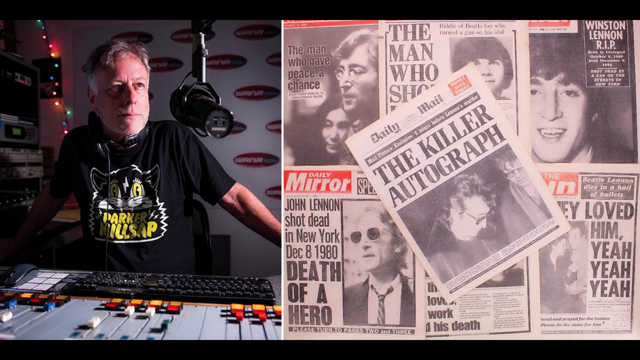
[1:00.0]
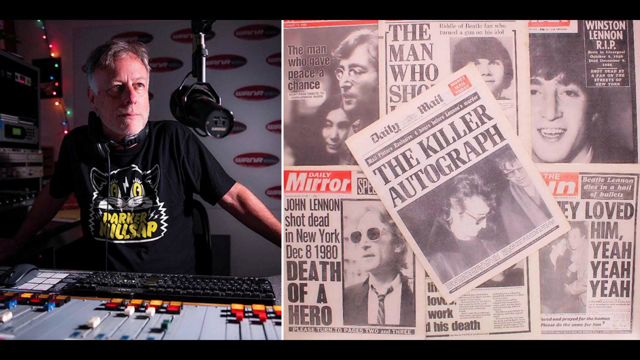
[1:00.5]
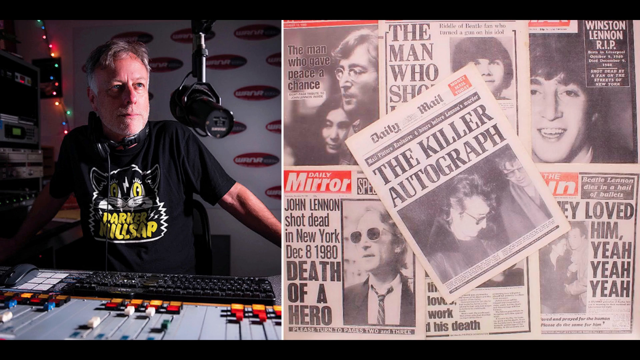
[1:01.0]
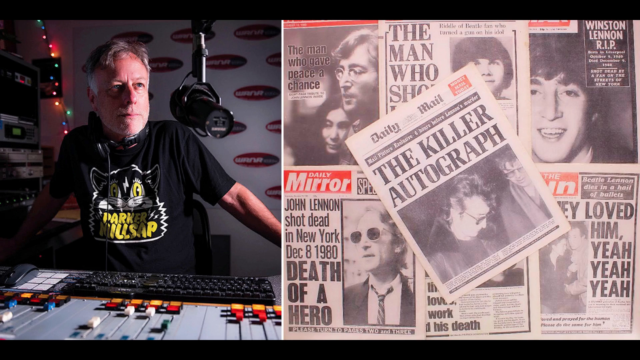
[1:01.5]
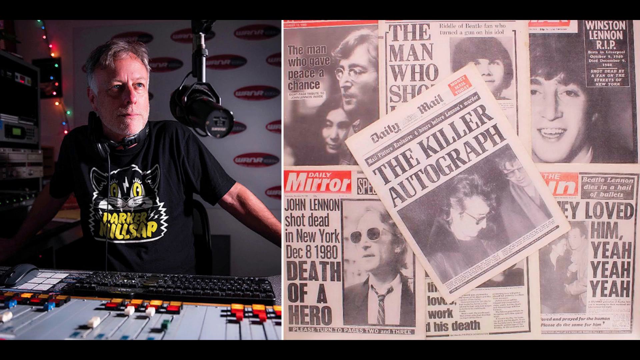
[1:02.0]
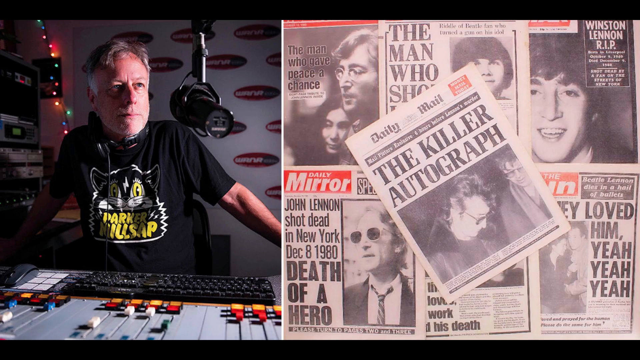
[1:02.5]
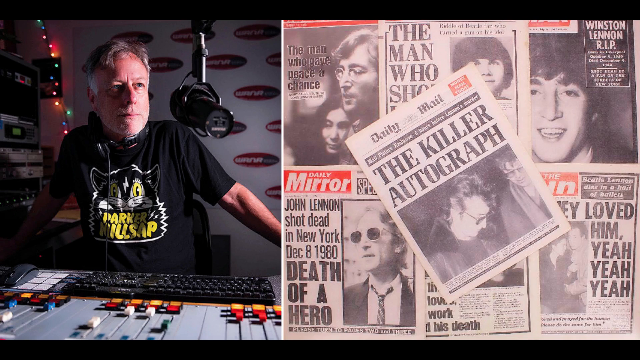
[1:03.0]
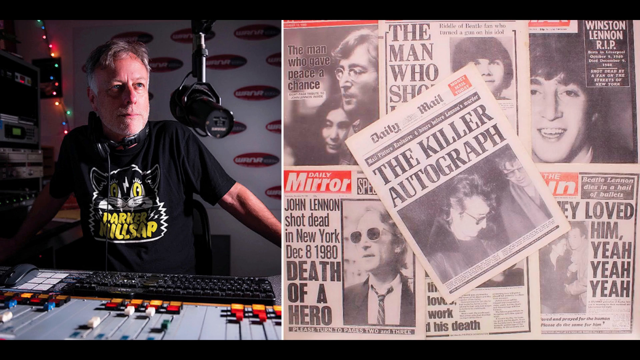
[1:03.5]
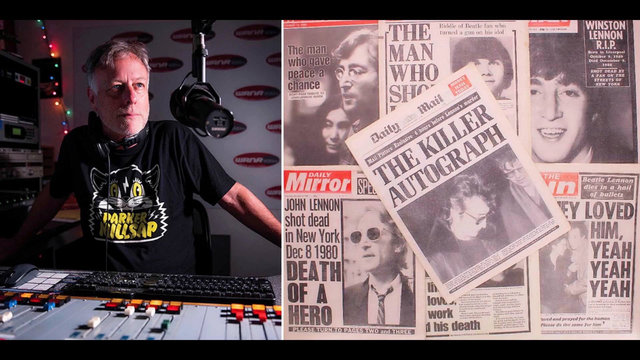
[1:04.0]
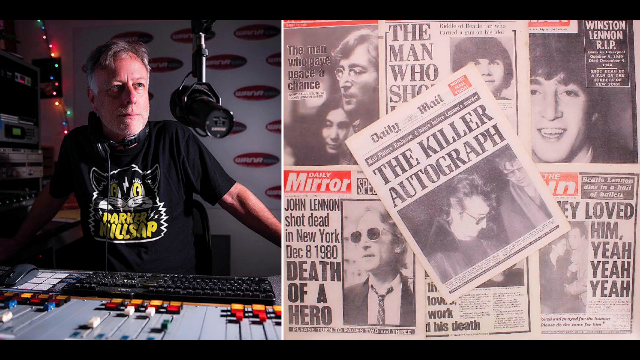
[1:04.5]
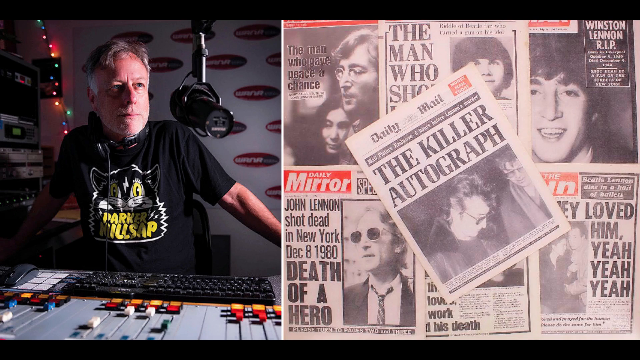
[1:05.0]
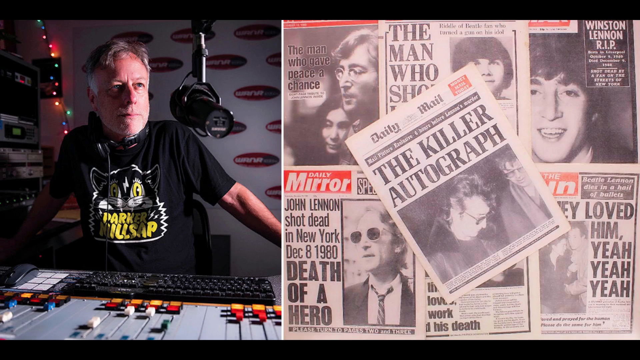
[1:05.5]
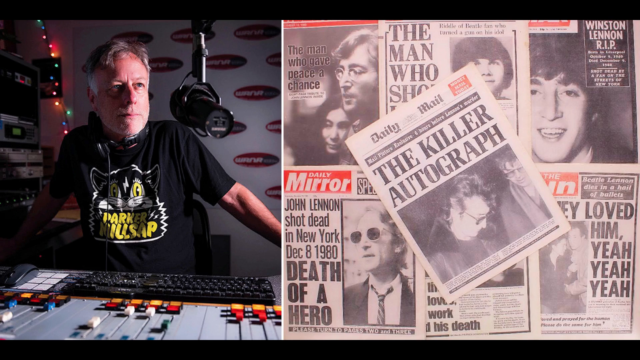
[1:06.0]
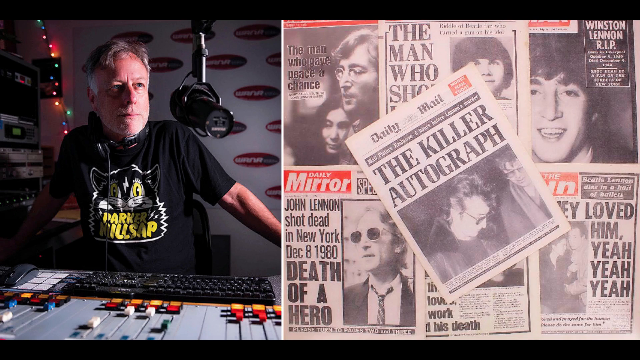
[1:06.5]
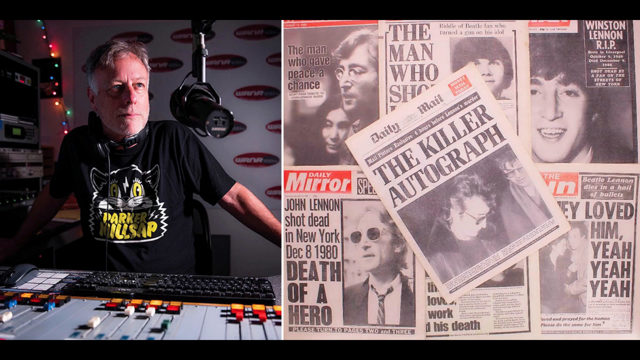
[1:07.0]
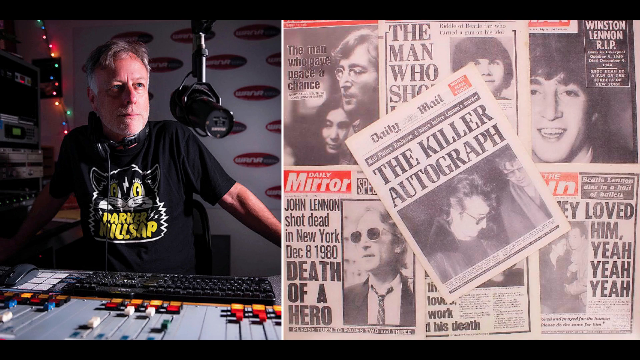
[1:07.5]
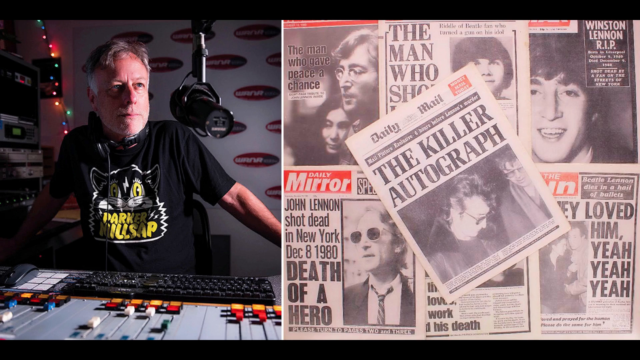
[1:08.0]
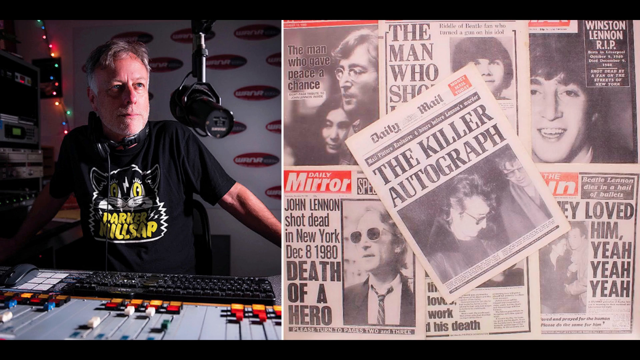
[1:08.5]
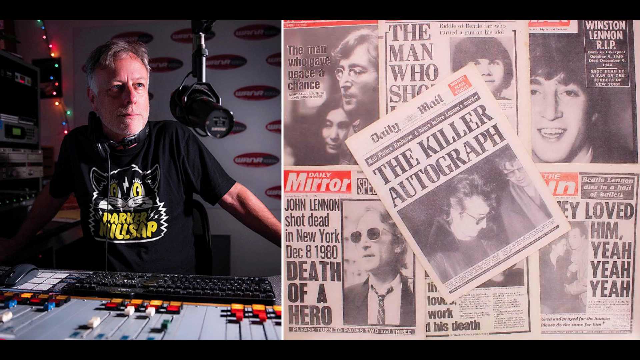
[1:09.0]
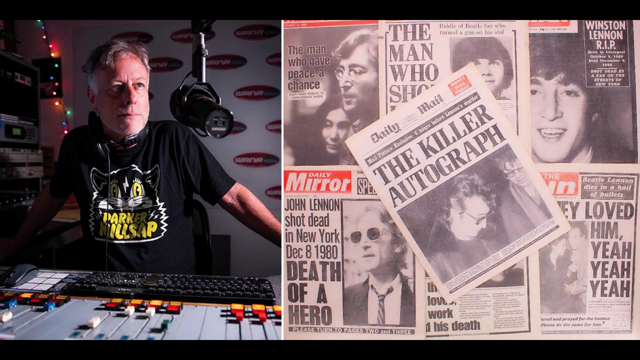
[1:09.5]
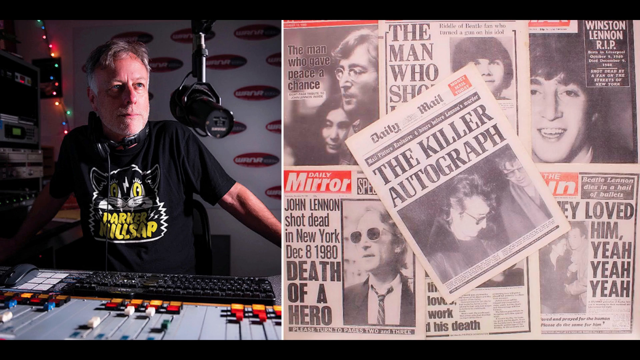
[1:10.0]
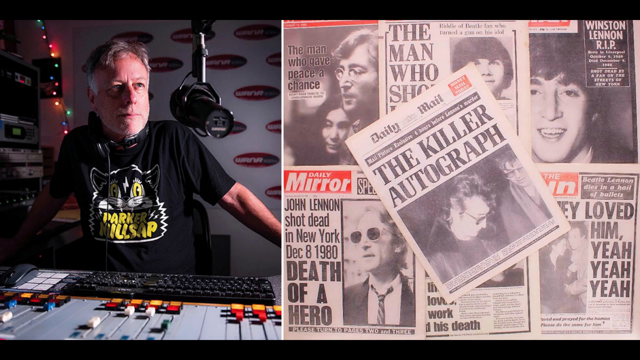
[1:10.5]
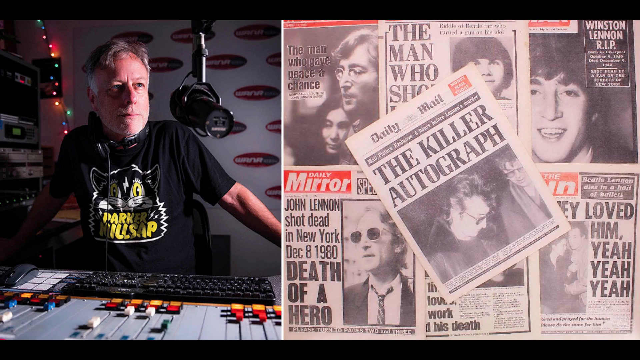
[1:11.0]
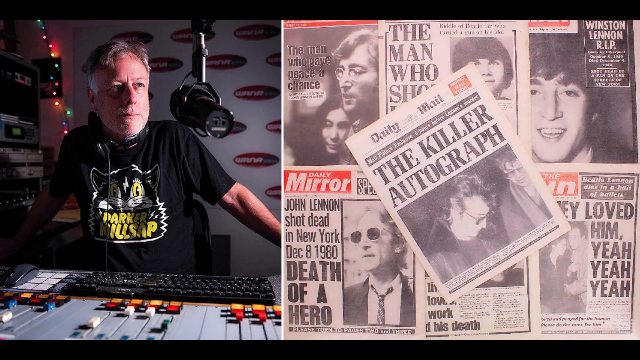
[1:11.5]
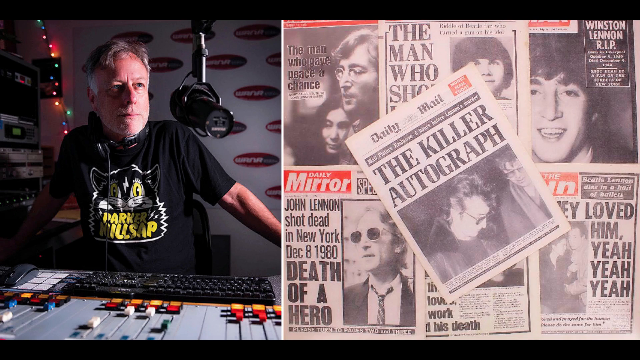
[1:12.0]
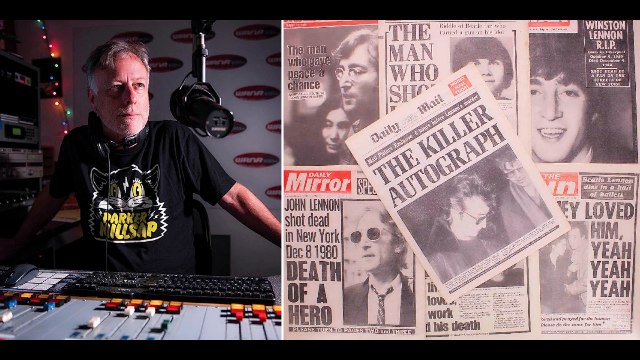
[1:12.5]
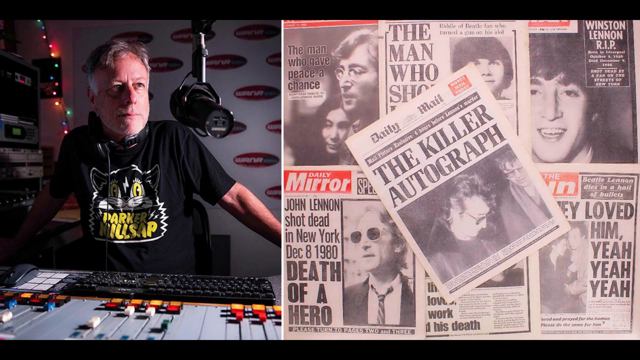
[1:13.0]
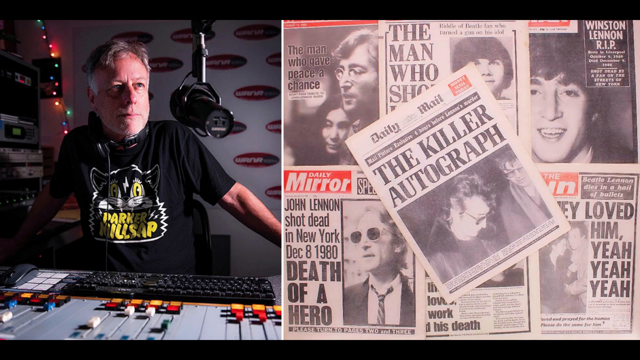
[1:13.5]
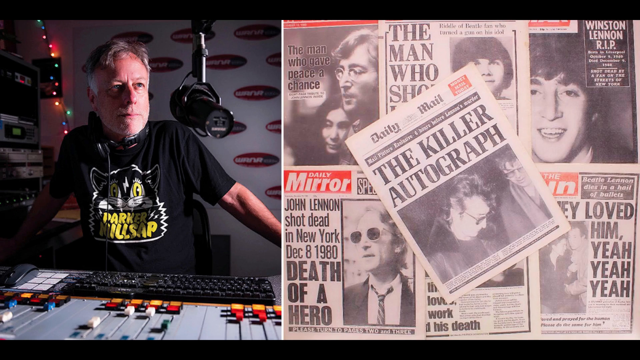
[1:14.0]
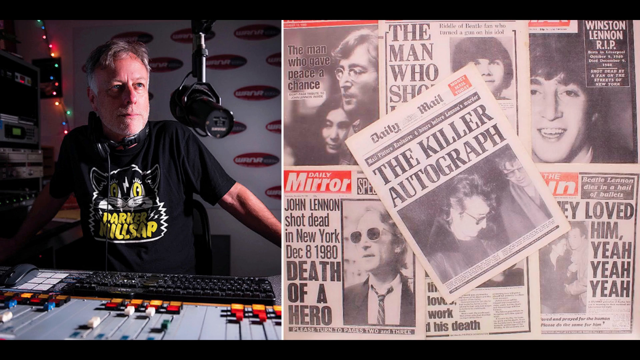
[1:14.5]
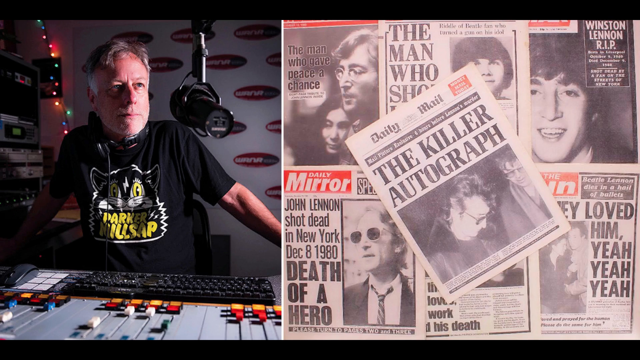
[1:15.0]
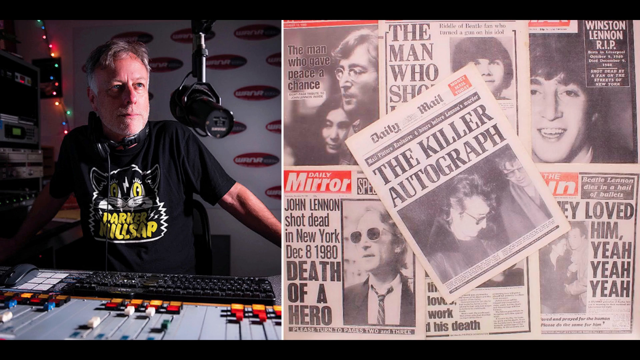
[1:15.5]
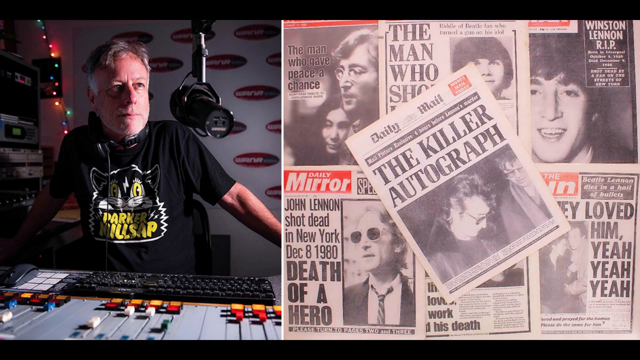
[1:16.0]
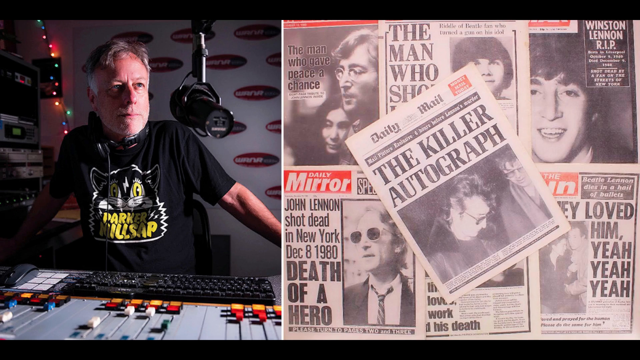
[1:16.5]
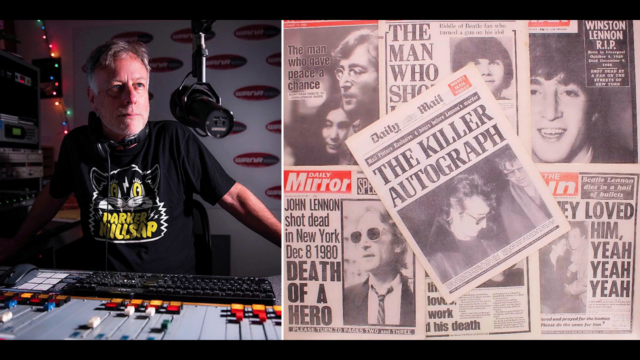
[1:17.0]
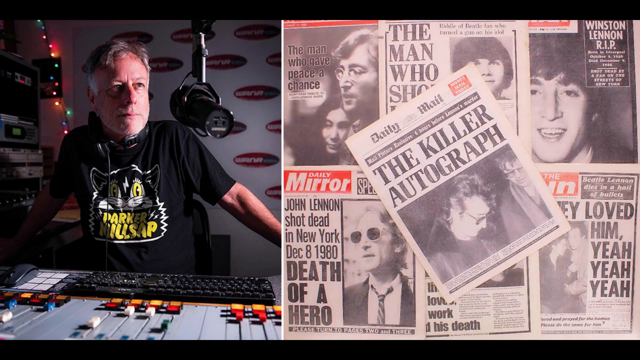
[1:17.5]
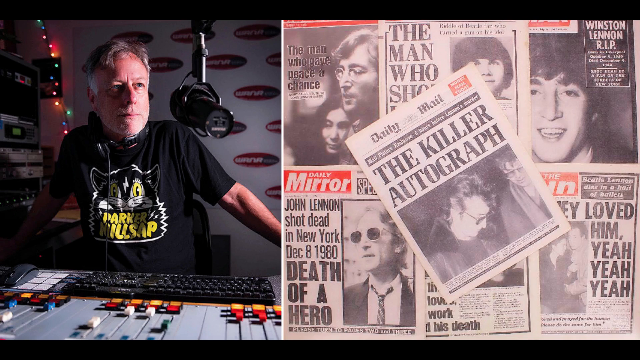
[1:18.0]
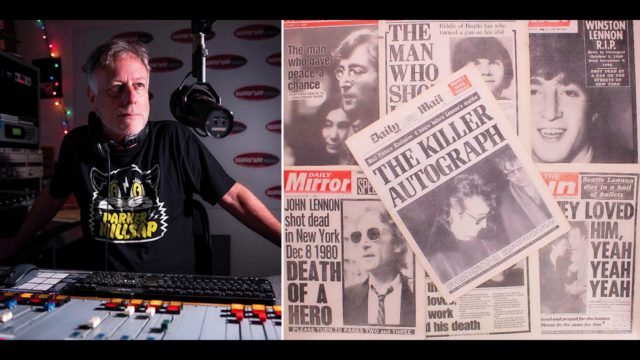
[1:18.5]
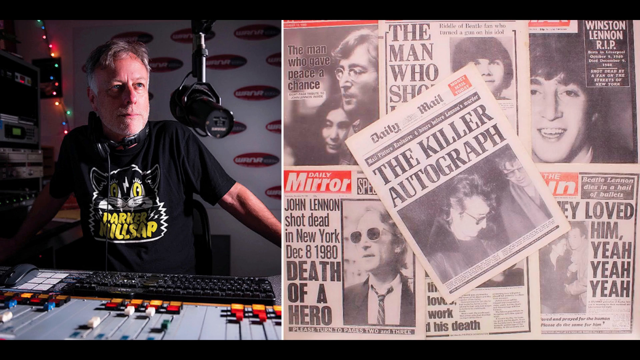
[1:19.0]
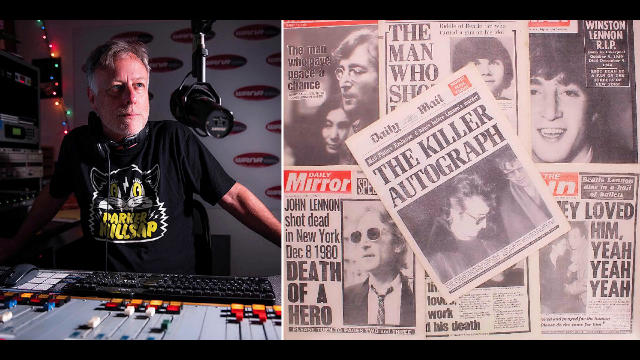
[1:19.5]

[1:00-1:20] The same static split-screen image continues, with the DJ on the left and the newspapers on the right. The DJ, an older gentleman in a black shirt, sits in his booth. A large microphone in front of him, which he is using to talk, is suspended by a silver pole hanging from the ceiling. His expression is a little serious, kind of focused and concentrating. His left arm is extended away from him, and his hand is not visible in the image. Some of the controls on the desk in front of him can be made out. There looks to be a large black keyboard directly in front of him, and to the right of that is what looks to be a mouse pad with a three-by-three grid of identical white squares, with a wireless mouse resting on it; the top of the mouse is black and the base is kind of dark gray. In front of the keyboard is a gray metal panel with three sets of four yellow buttons going horizontally. Above them, in line with the yellow buttons, are red buttons, and above those are multicolored knobs that move vertically up and down, in white, blue and black, with what look to be some red ones as well.